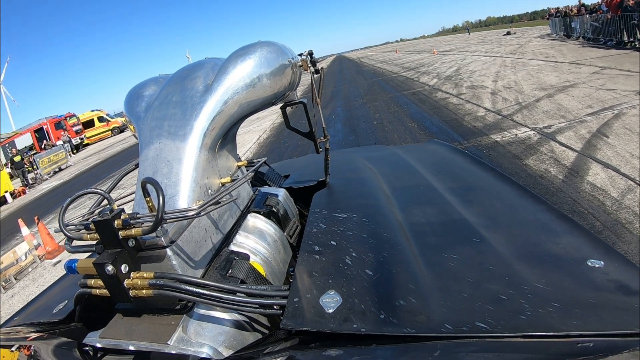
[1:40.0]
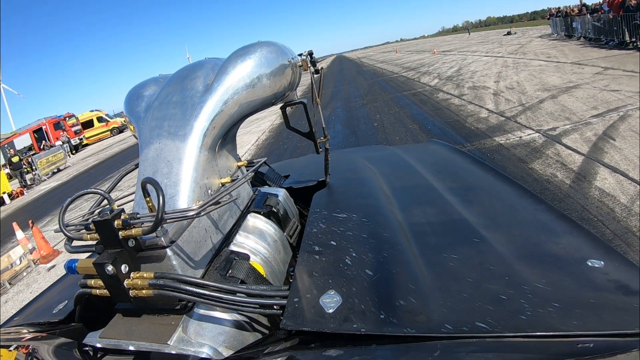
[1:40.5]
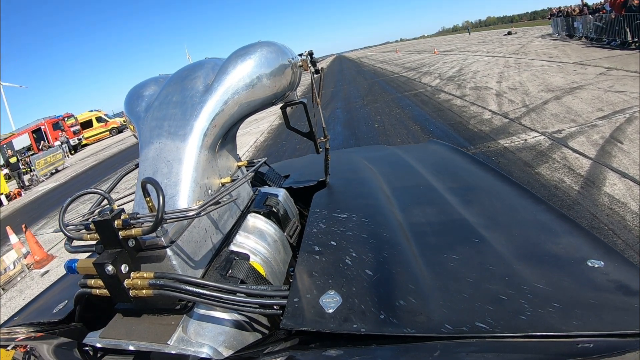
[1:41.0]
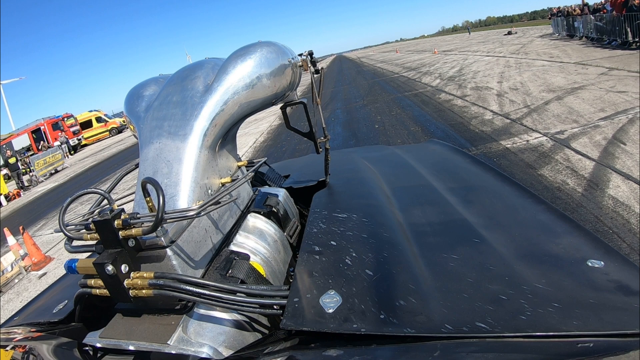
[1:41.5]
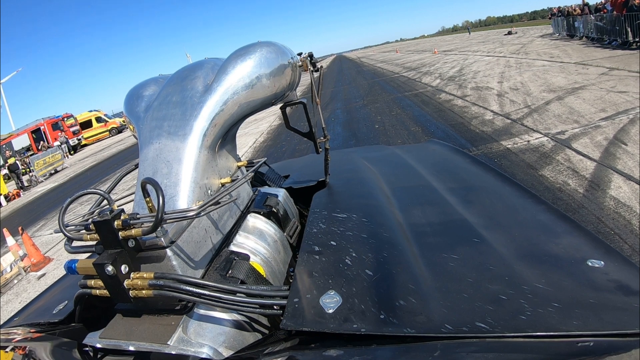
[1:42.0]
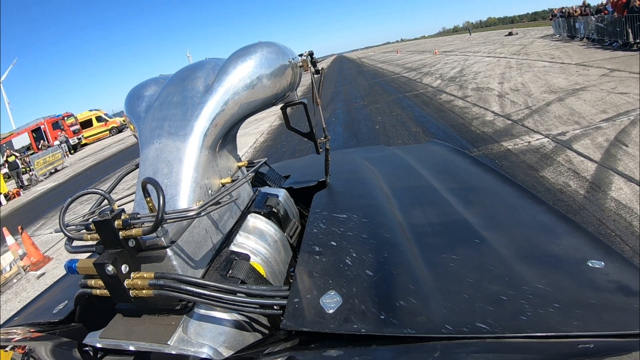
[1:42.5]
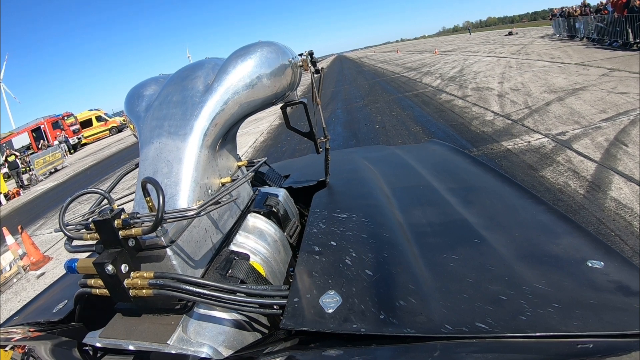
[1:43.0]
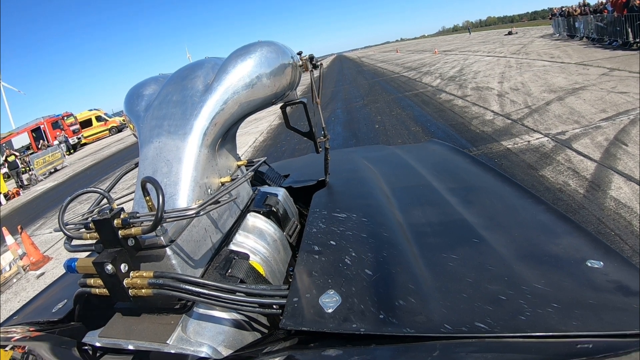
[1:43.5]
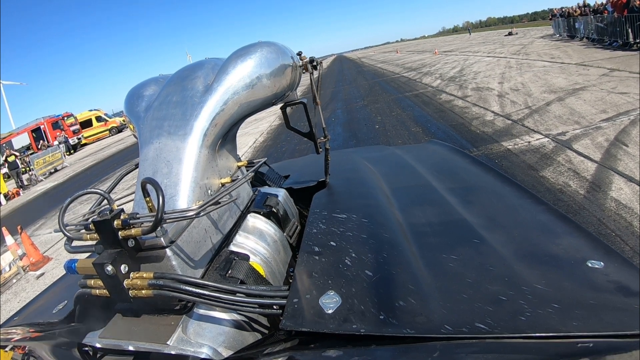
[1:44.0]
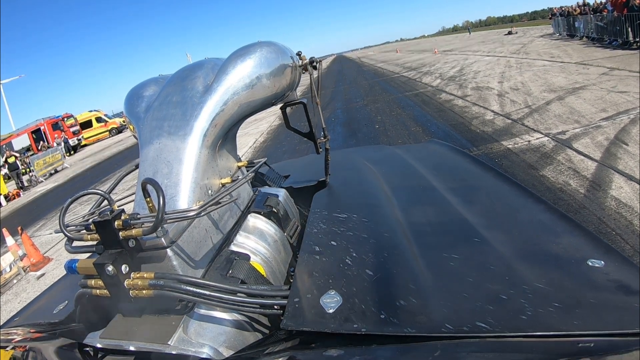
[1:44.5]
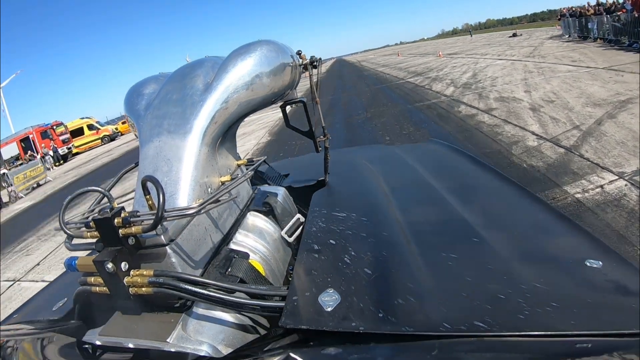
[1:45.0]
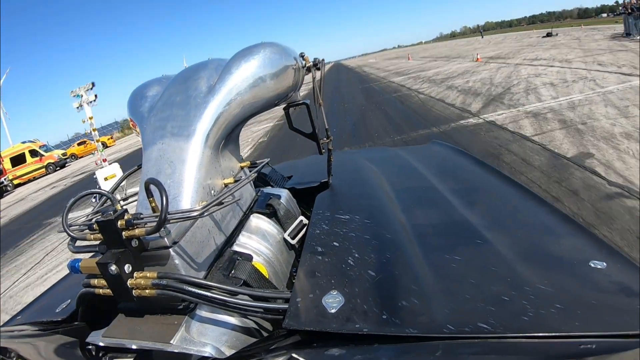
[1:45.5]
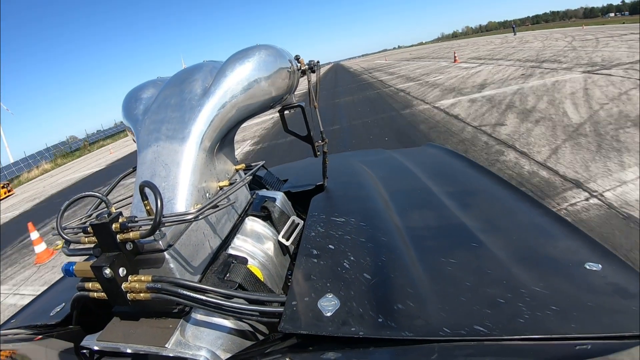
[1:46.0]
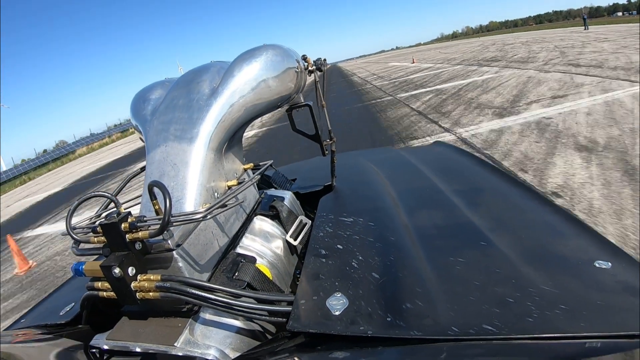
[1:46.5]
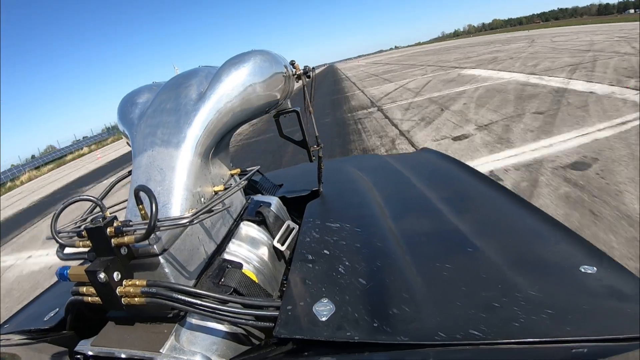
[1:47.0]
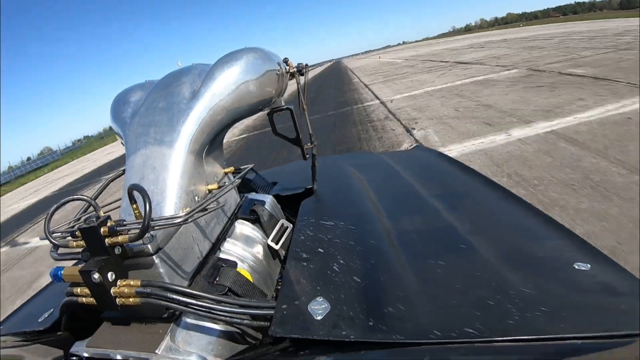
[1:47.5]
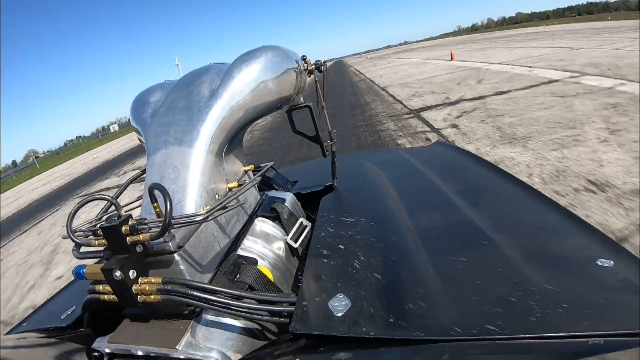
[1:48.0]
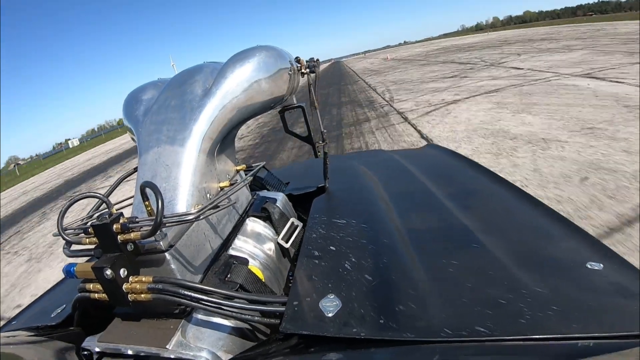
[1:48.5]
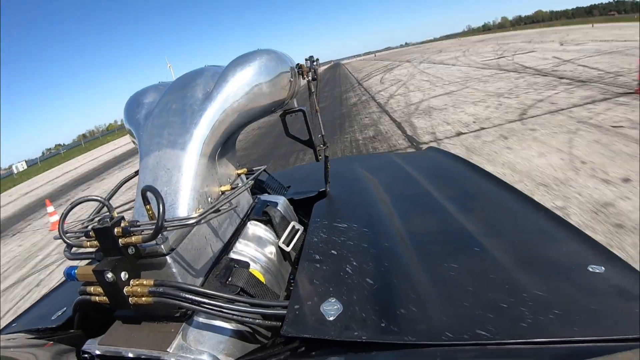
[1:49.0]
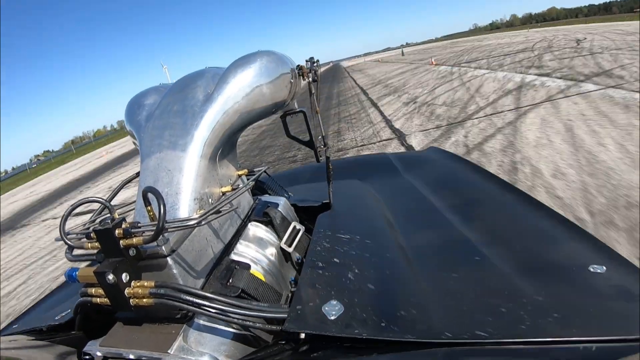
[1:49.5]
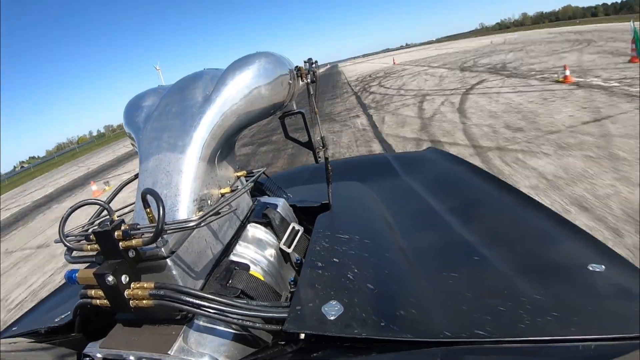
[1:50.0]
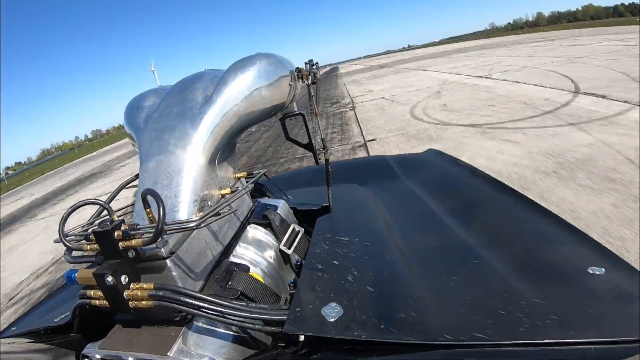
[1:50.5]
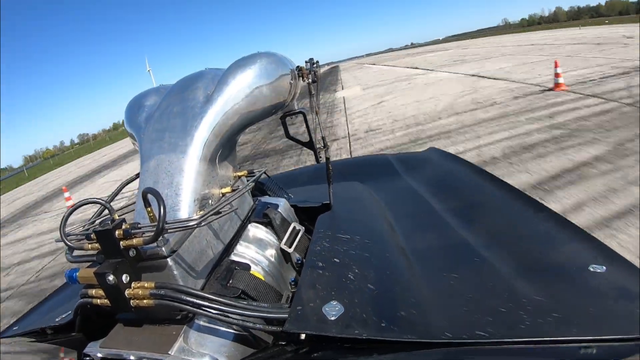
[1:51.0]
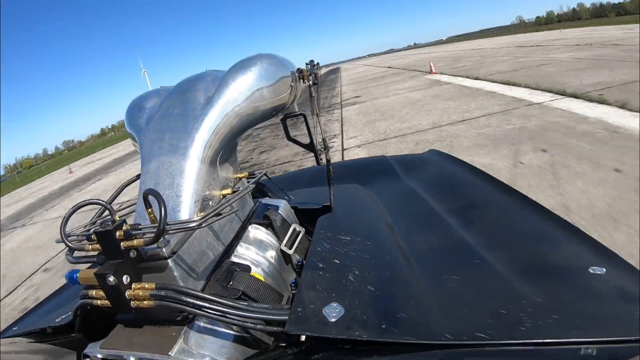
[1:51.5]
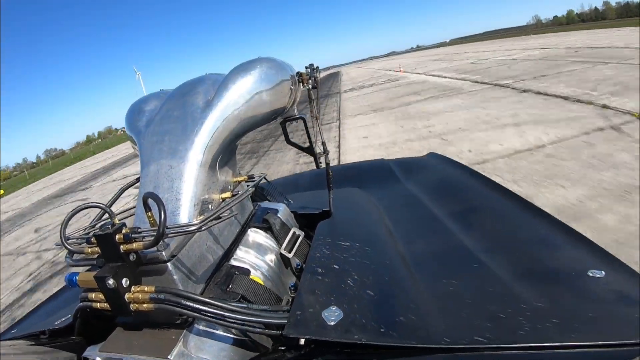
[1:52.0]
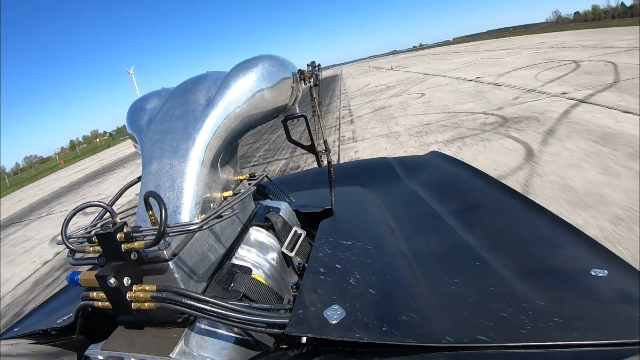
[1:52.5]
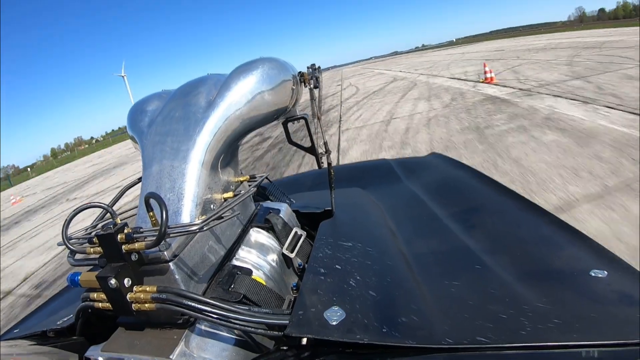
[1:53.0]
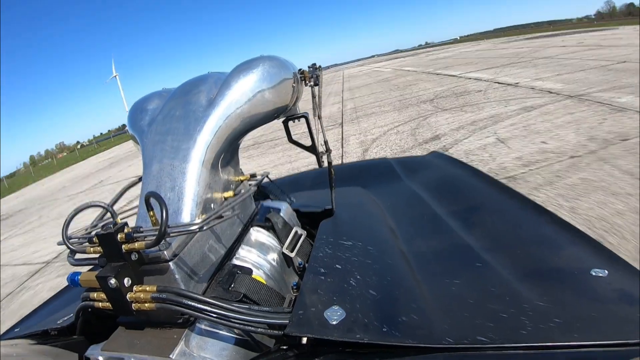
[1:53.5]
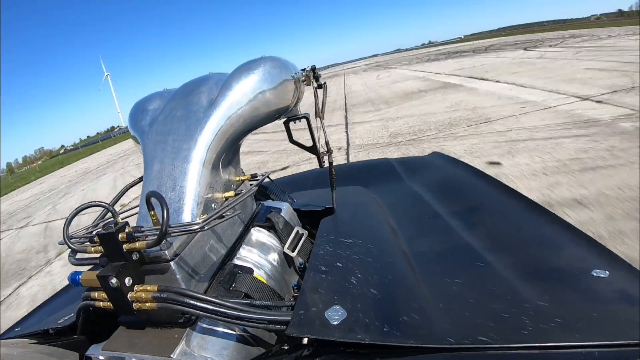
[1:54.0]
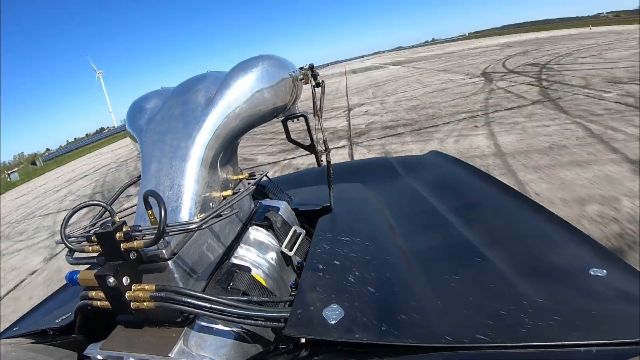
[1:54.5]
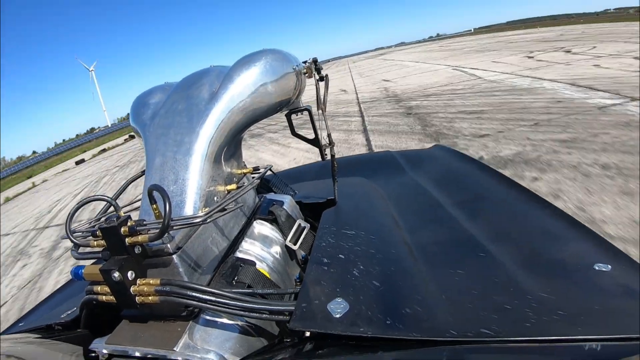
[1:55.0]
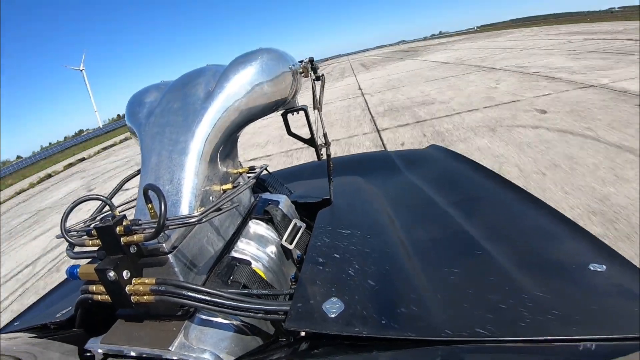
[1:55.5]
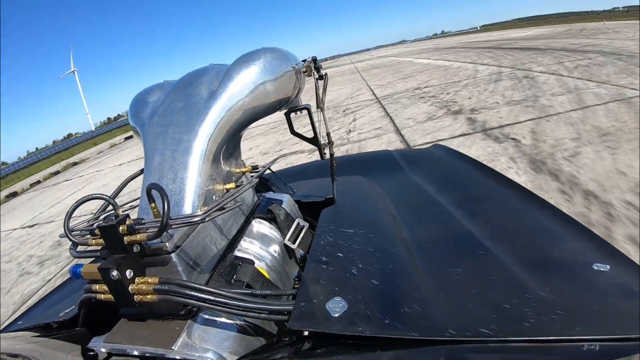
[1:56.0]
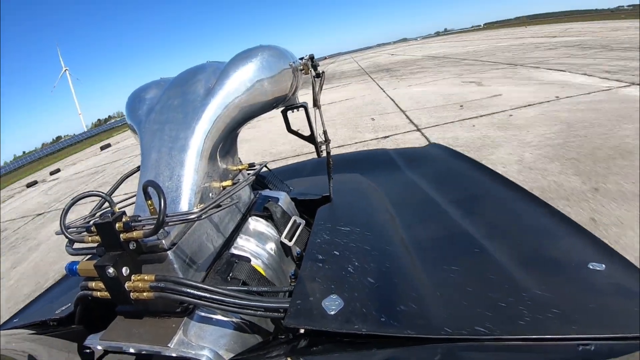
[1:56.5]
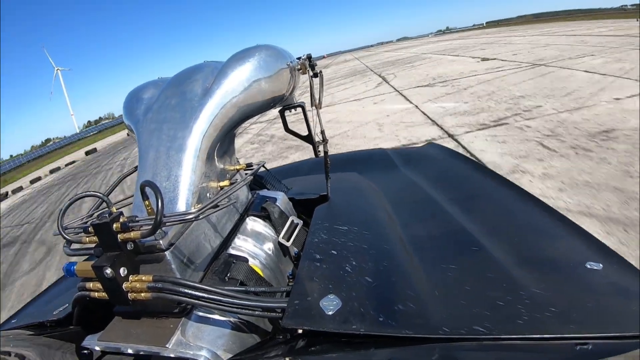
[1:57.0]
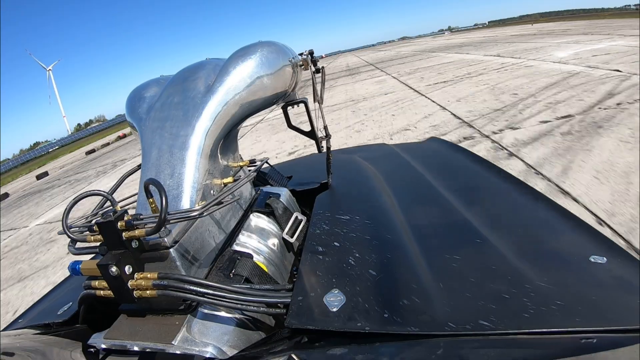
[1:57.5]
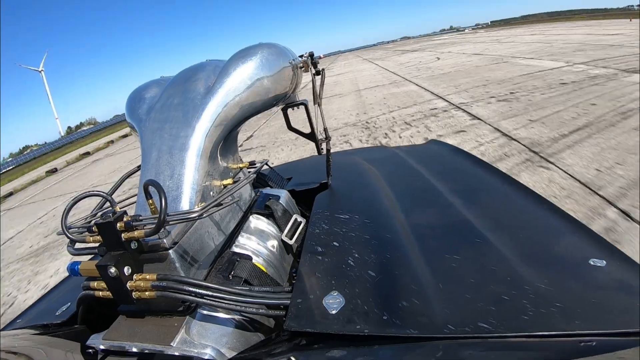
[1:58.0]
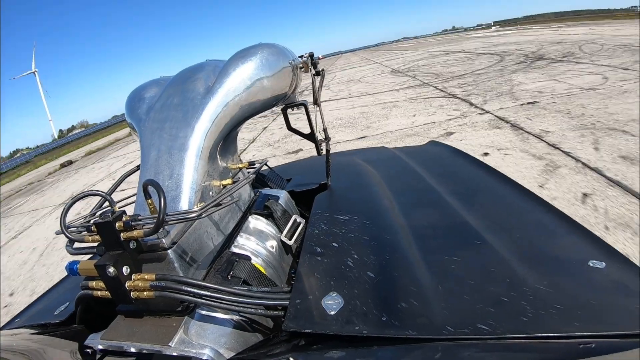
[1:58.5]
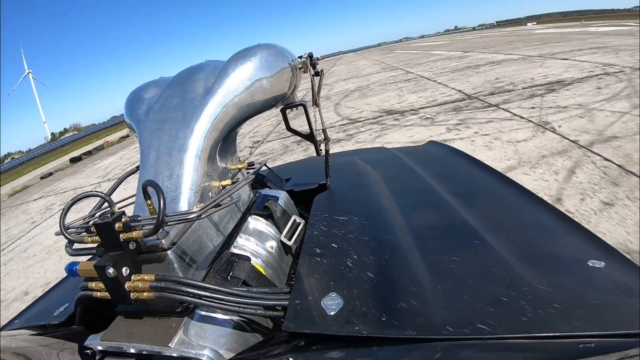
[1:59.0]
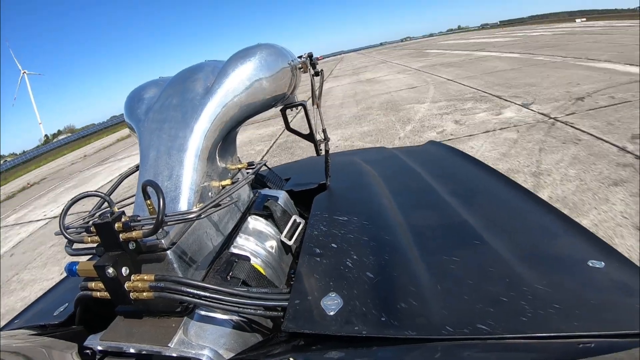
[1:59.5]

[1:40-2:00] A drag racing car is at the start of a race, a few seconds before it takes off down a very wide gray strip of cement. Before it takes off, a crowd is visible on the right-hand side and some cones on the left-hand side, along with some cars and trucks on the left and a windmill in the distance. The sky is blue. As the car takes off it appears to be going very fast, and steam comes out of the hood. On top of the car is an engine or something silver with wires coming out of it. Apart from the crowd on the right-hand side, no other people are visible. The track has black down the middle, but as the car drives, the black turns to gray.